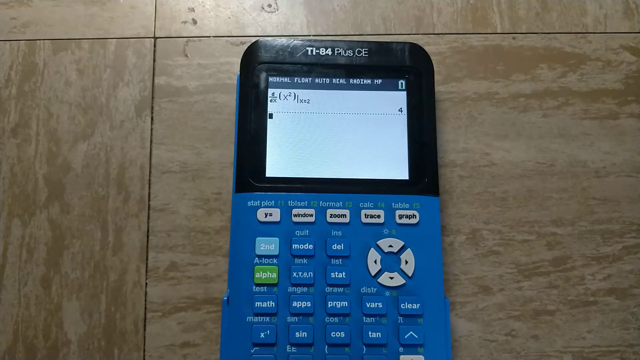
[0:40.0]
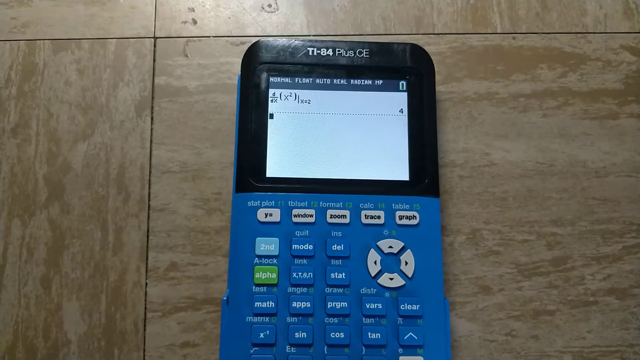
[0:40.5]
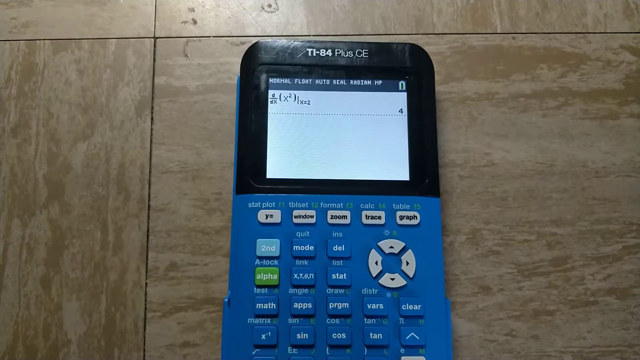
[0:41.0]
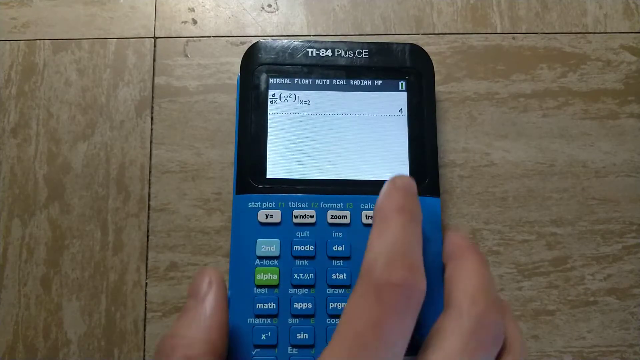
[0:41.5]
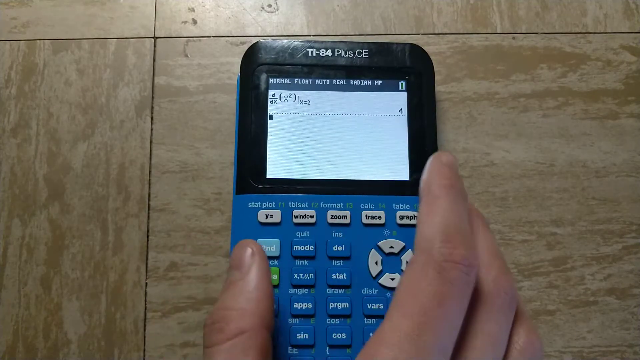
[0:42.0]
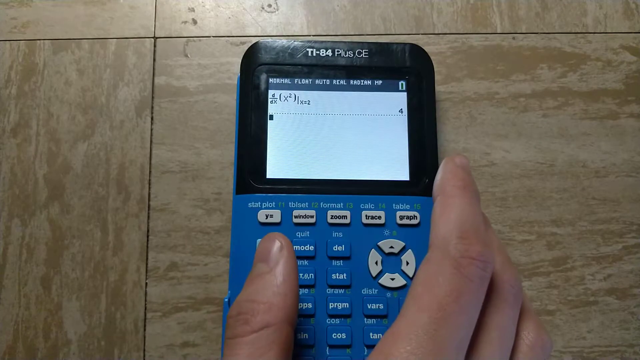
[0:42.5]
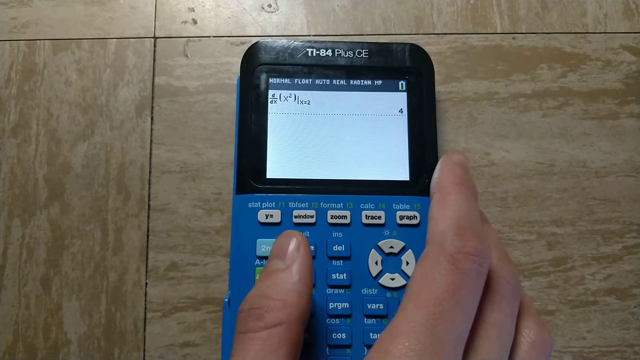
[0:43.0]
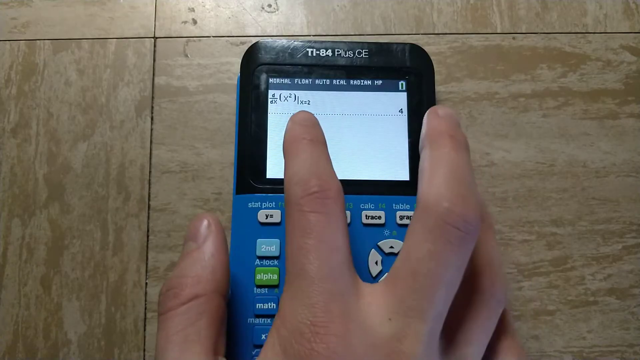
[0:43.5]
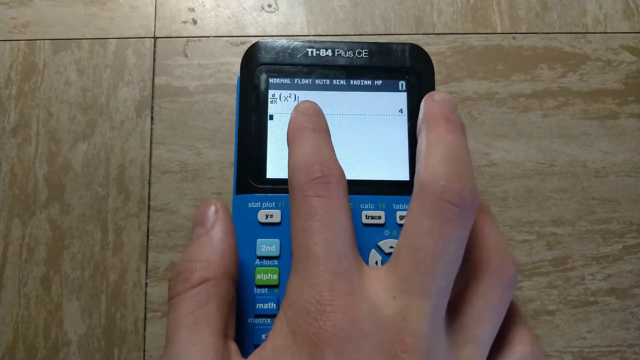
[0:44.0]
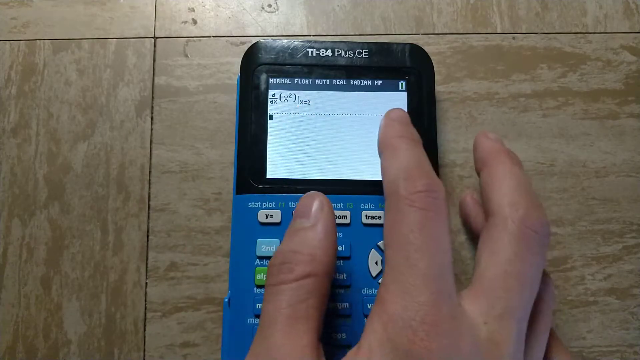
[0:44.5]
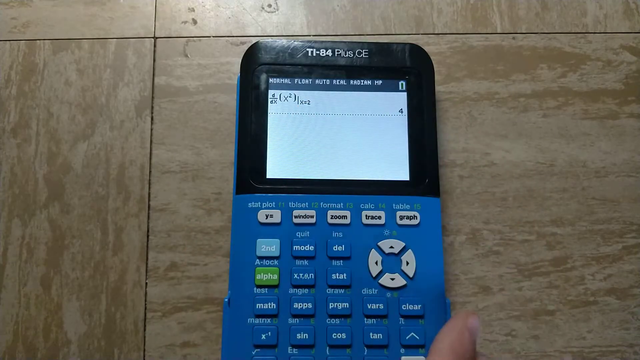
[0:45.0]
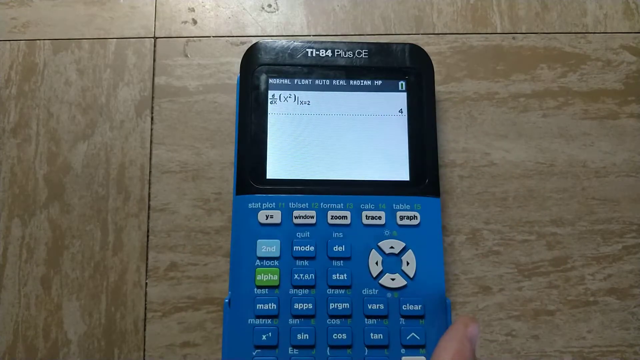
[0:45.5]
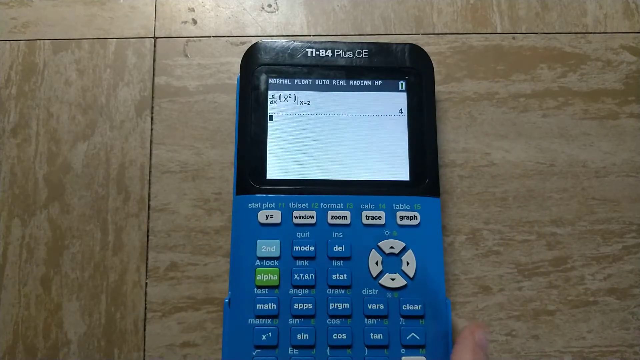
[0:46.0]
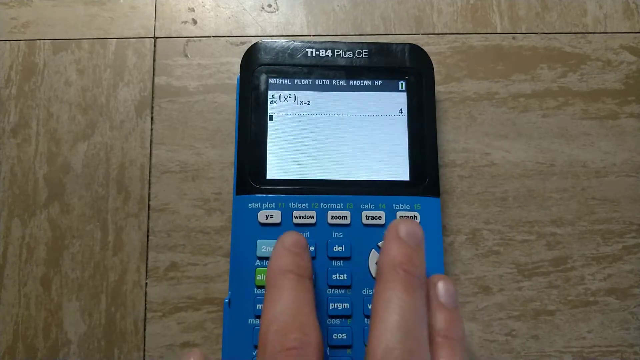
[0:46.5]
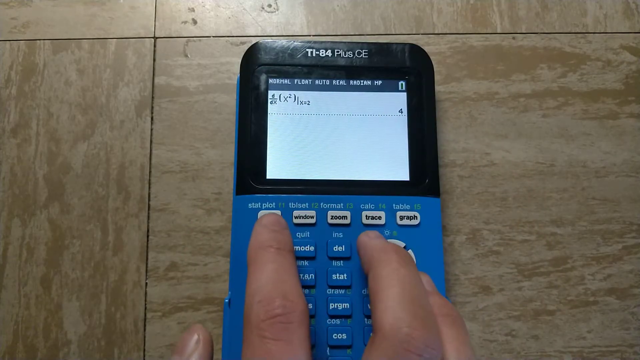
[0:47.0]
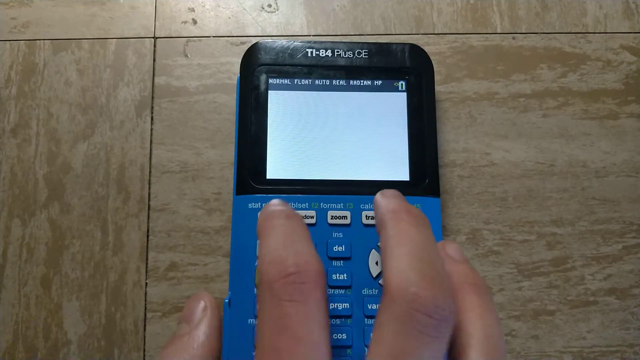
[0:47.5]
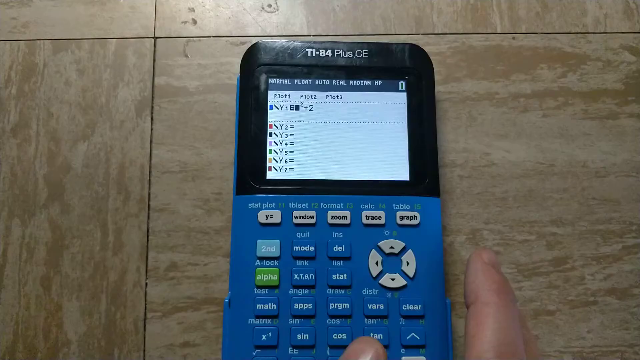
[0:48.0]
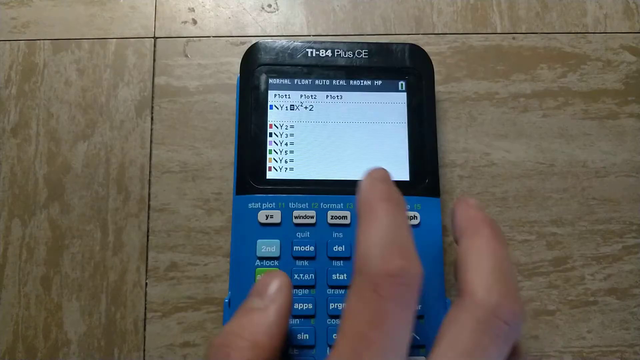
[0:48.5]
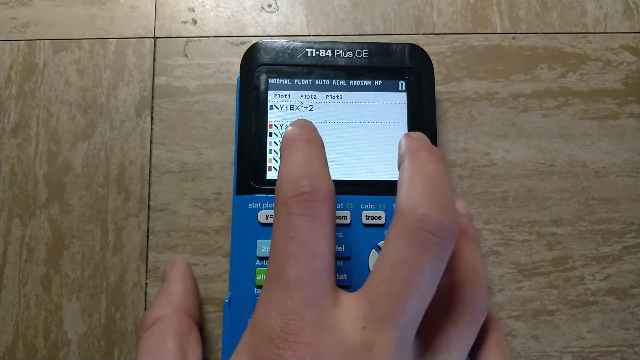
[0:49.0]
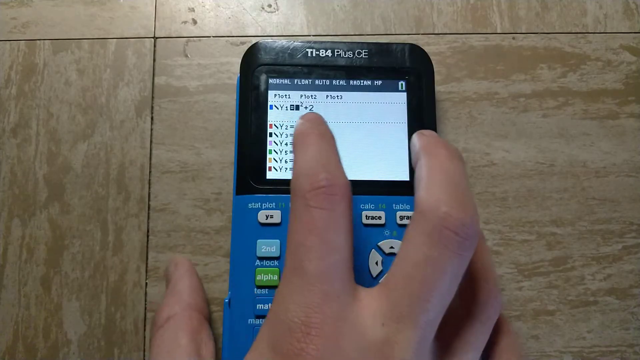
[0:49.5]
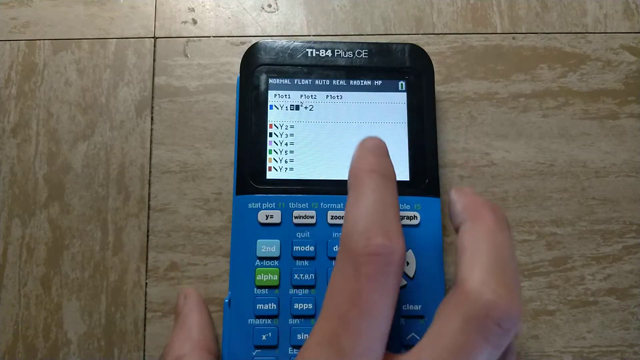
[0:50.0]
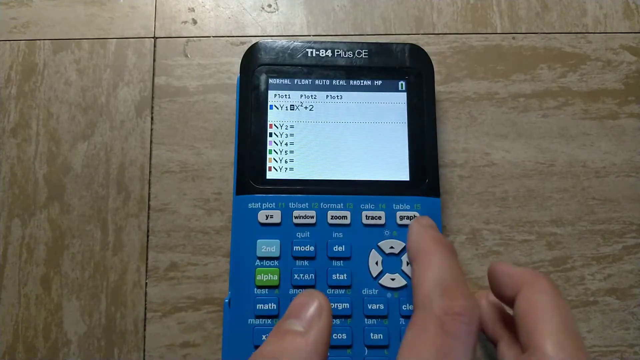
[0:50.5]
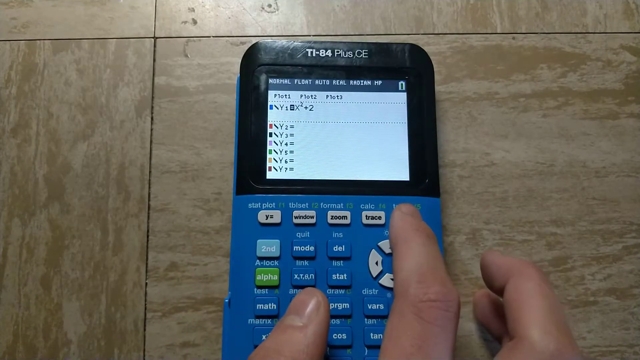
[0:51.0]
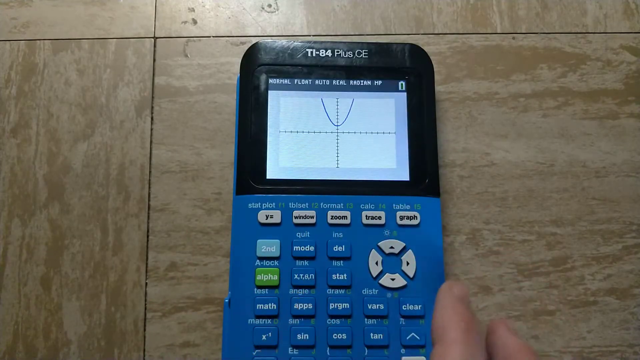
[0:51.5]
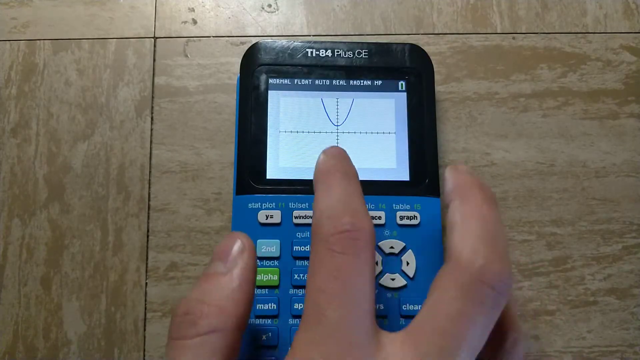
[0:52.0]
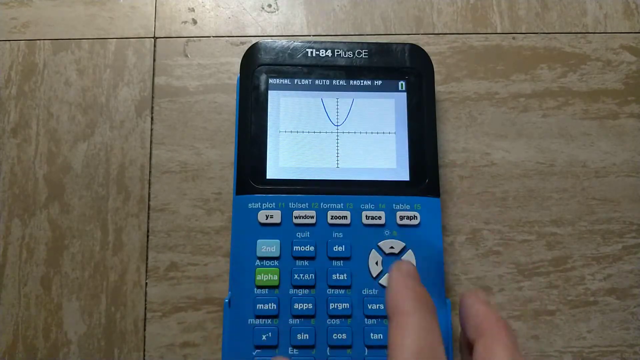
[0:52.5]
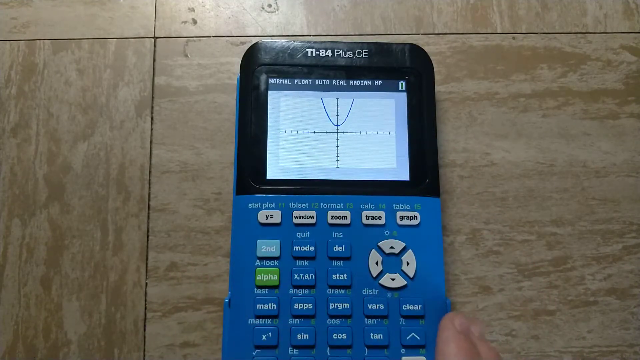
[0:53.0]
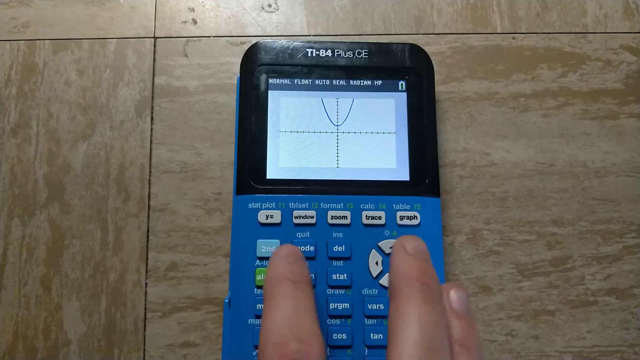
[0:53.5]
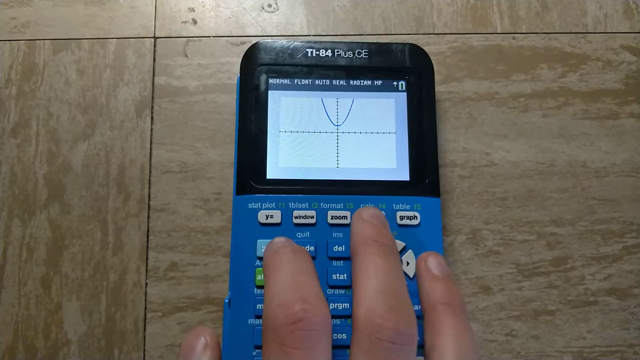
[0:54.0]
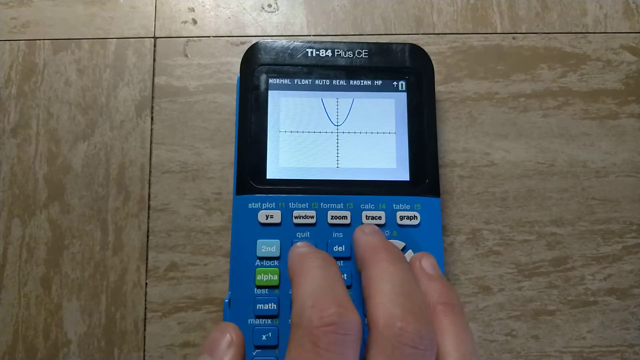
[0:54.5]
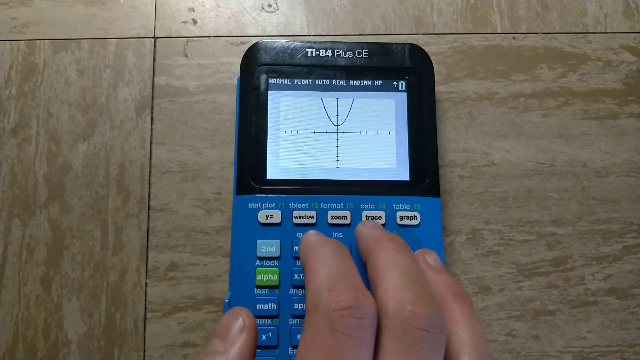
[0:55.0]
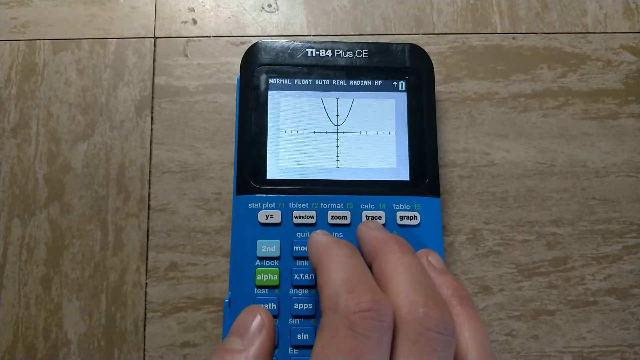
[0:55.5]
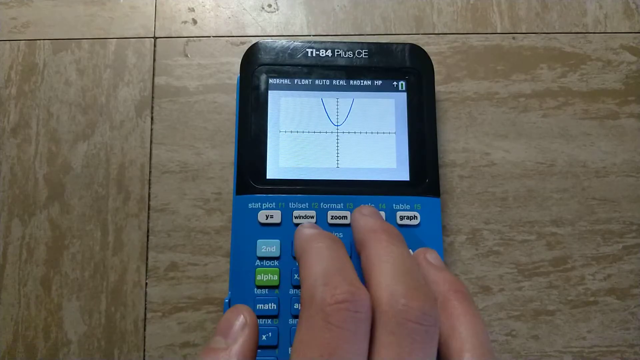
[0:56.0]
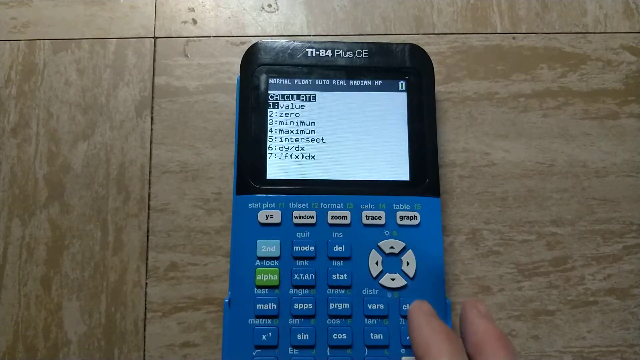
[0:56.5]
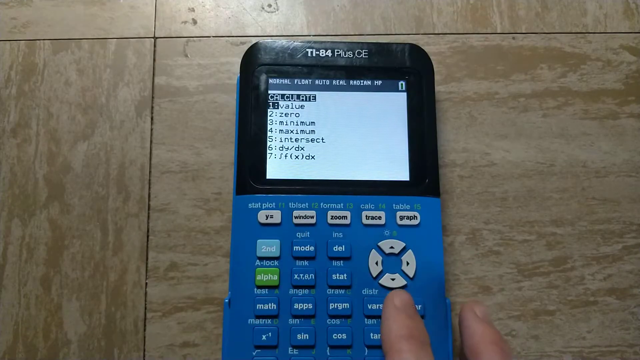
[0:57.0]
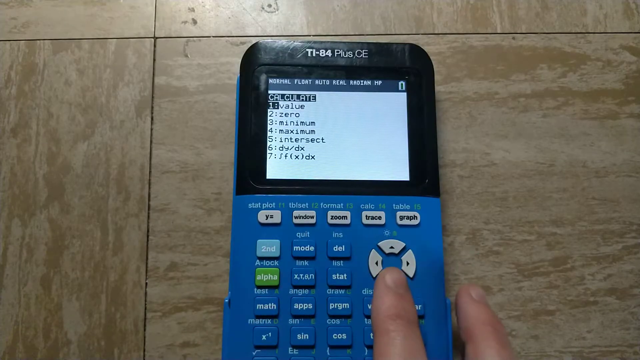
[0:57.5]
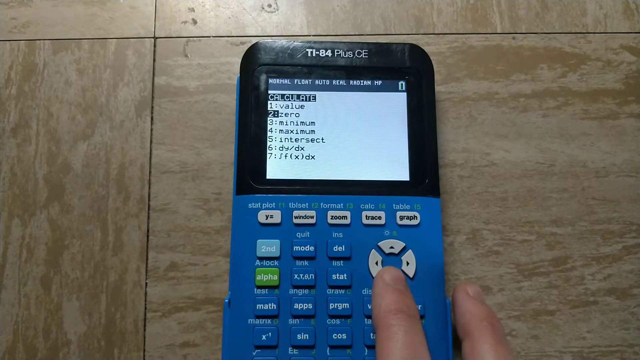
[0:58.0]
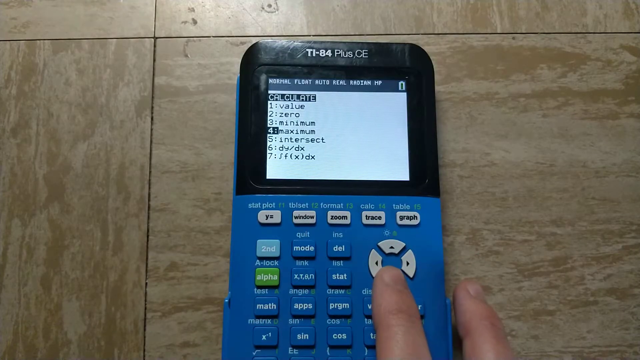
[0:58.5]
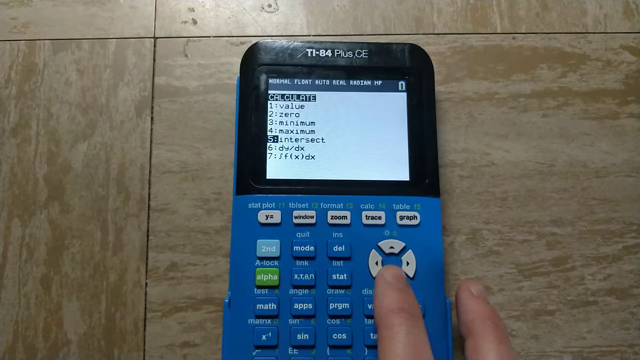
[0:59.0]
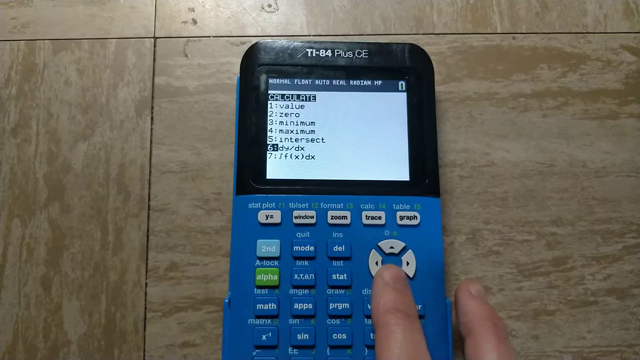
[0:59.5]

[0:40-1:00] The calculator is still shown, with a person's hand pressing the buttons, and what is pressed shows on the screen. The calculator is placed on the floor and is blue and black, with small areas of another colour that look gray, though possibly white, and a green one. All the buttons are labeled with different names, and names are also written next to each button. When the person touches the screen, information appears written on it; the person seems to be calculating or writing something. The text on top of the calculator, made up of letters and numbers, reads "IT/84 plus CE". It looks like someone busy with a calculation.